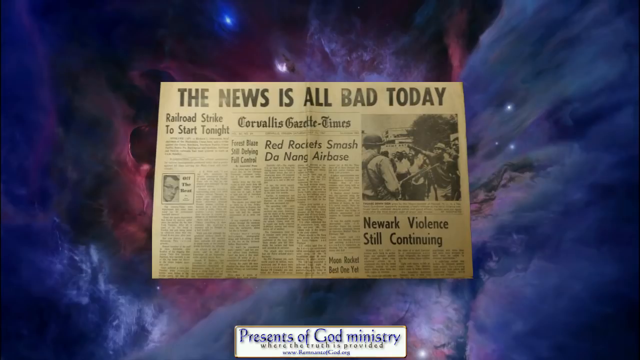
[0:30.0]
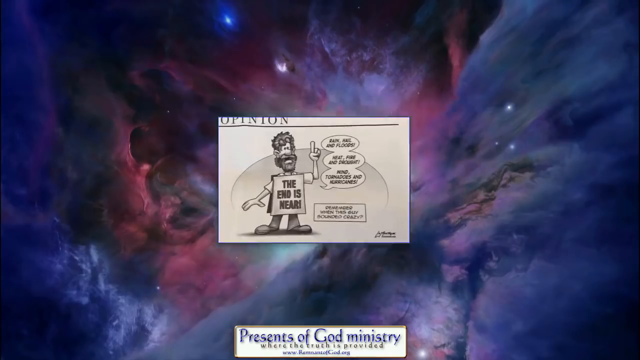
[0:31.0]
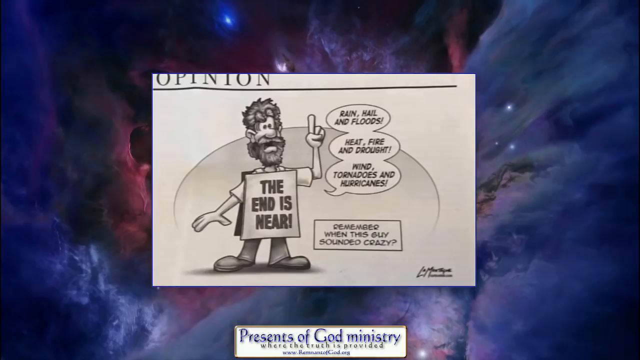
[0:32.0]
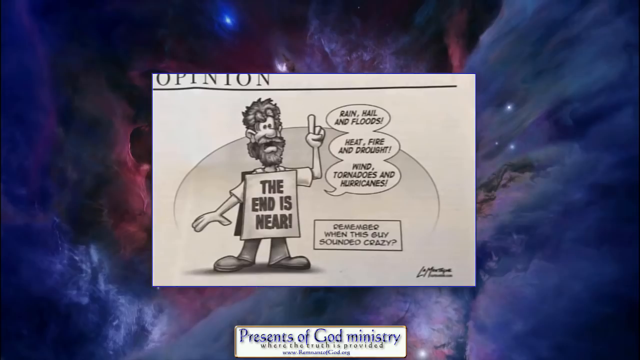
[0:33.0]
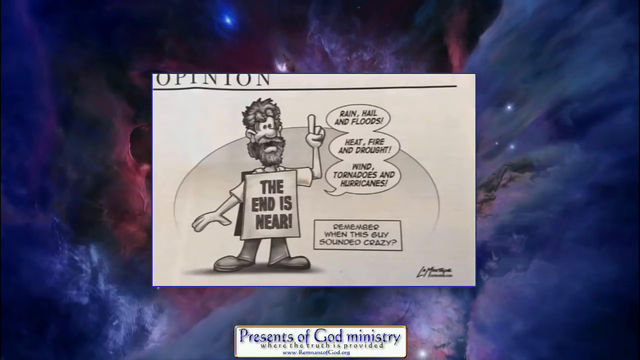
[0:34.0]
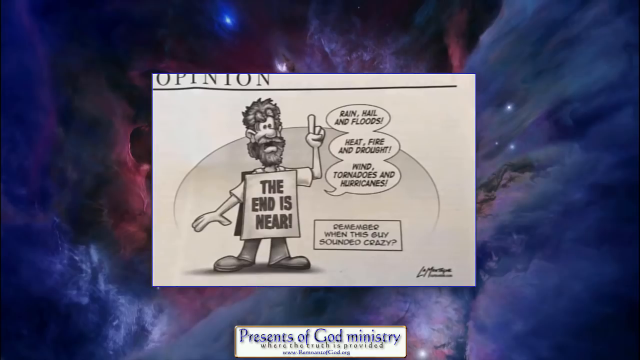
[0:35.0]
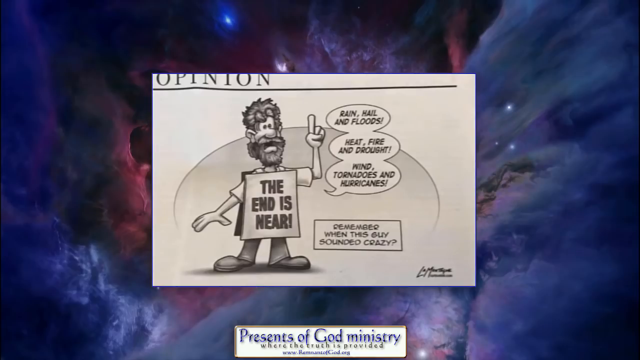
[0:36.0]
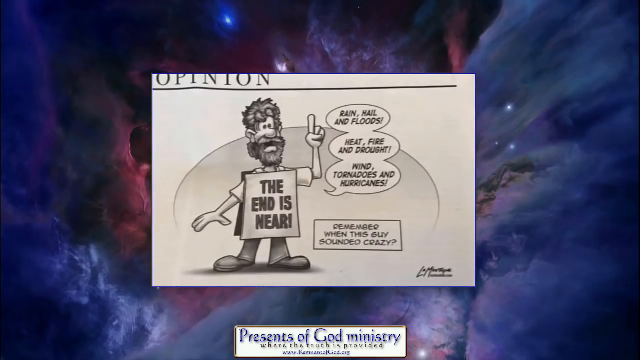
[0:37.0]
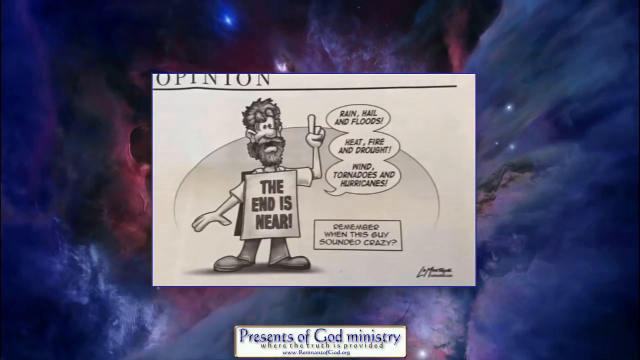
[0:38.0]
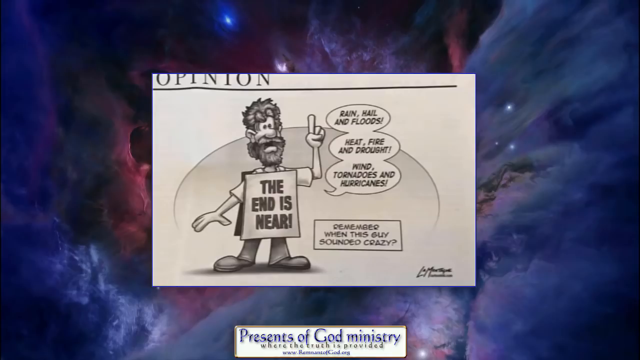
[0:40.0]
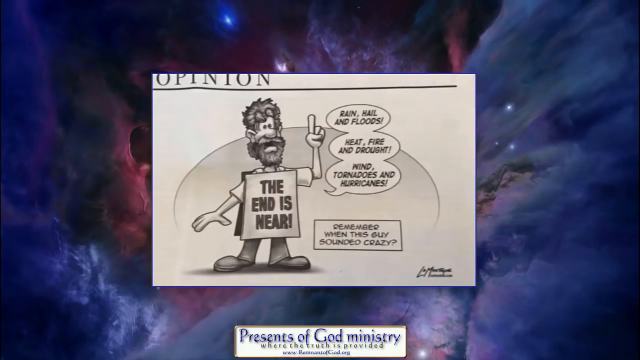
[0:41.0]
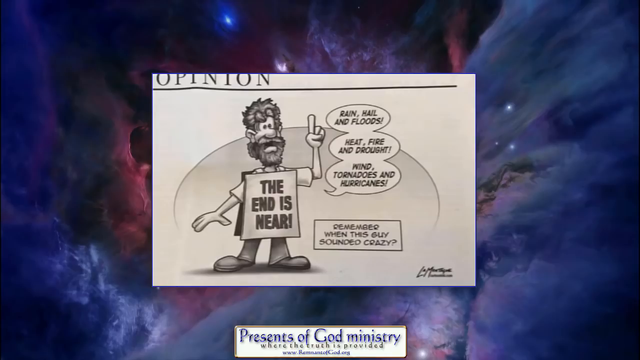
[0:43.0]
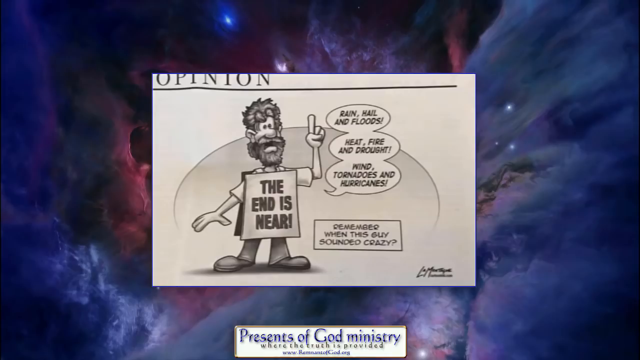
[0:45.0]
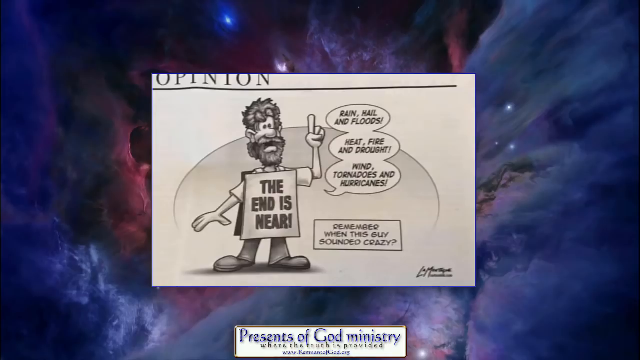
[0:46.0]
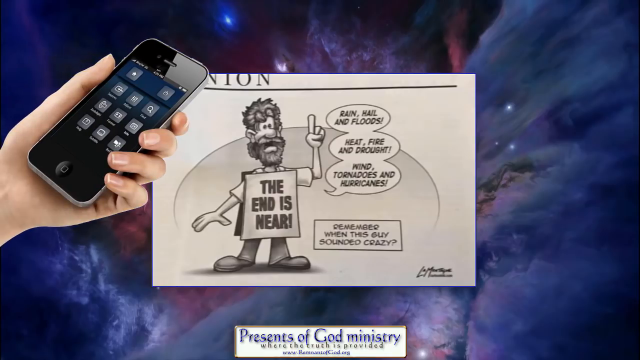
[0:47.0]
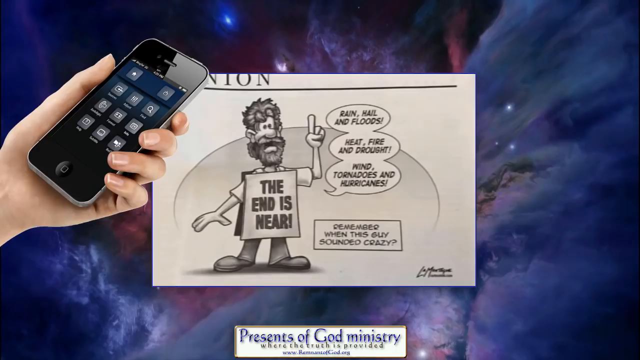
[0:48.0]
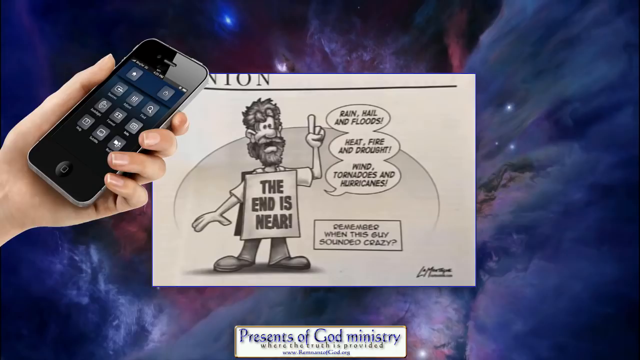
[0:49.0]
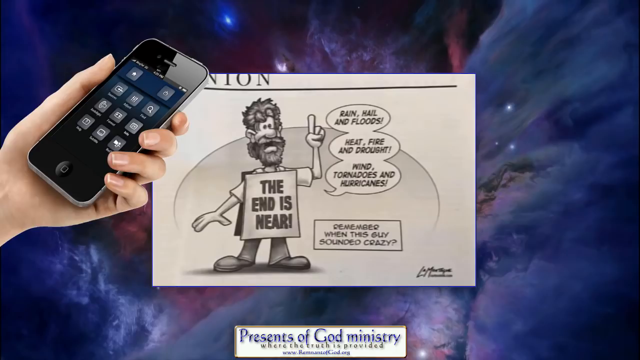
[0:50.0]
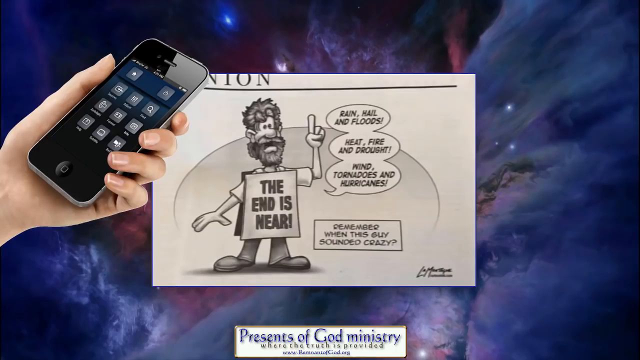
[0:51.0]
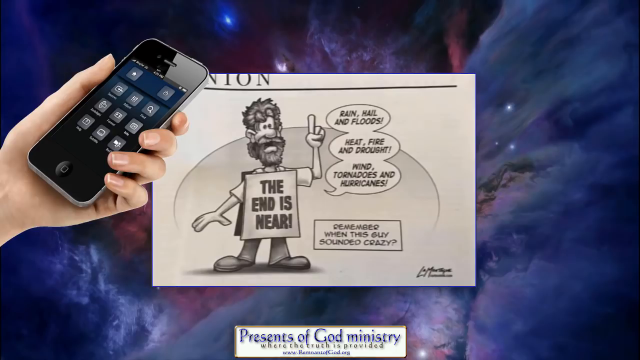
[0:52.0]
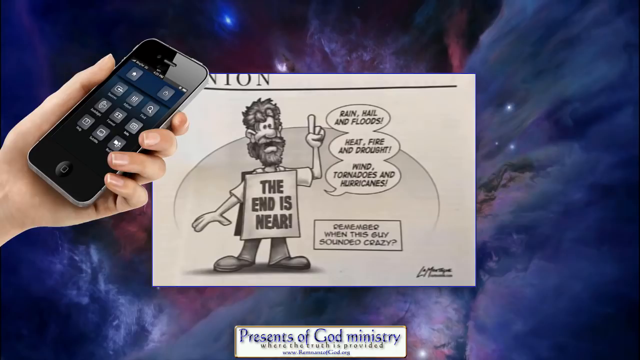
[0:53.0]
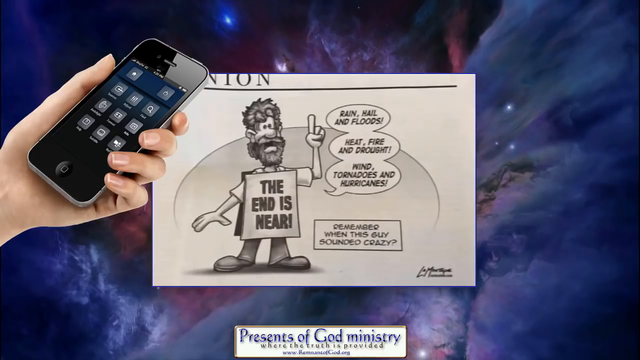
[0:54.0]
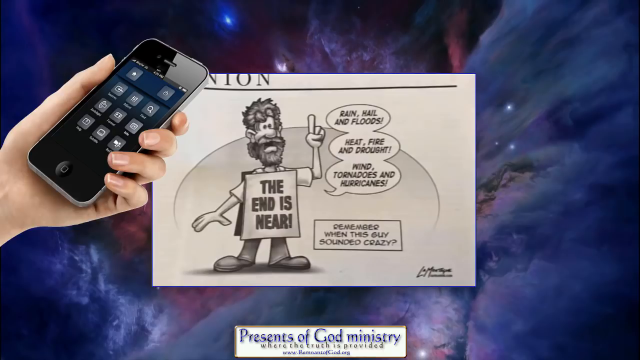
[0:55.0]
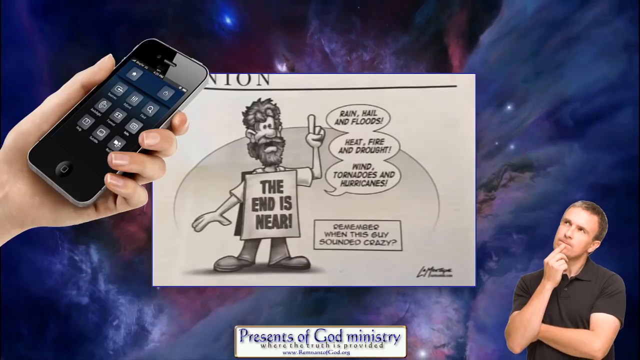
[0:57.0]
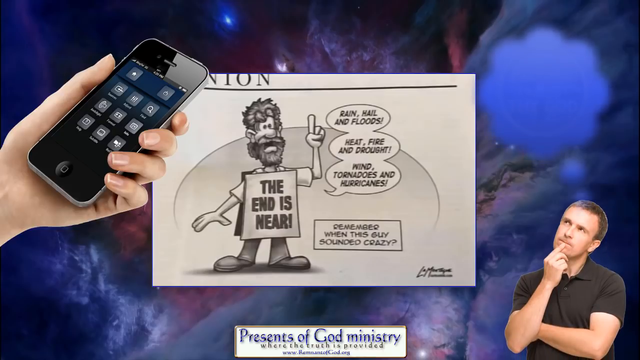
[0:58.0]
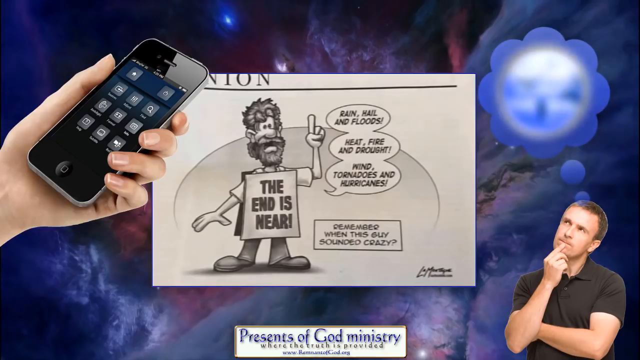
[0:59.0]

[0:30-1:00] The newspaper goes backwards toward space and disappears. From the deep space, a new black-and-white cartoon comes forward. On the left is a man with dark scruffy hair and a scruffy beard, holding a sign that hangs around his shoulders and goes in front of him, reading "the end is near". One arm is bent at about a 90-degree angle with the pointer finger pointing up, almost as if emphasizing the message, and his other arm is roughly straight out. The cartoon stays on screen for about five seconds. Then another transition follows: from the left side, probably its center, a photograph of a person holding a smartphone comes in. It appears to be their left hand, palm facing the viewer with the smartphone in it; the phone looks like a typical iPhone, maybe a smaller, older model. In the lower right corner a small pop-up appears of a white man looking up, apparently toward either the article or the person holding the smartphone. His right hand touches his chin, almost as if he is thinking, and bubbles rise above his head showing what he may be thinking.